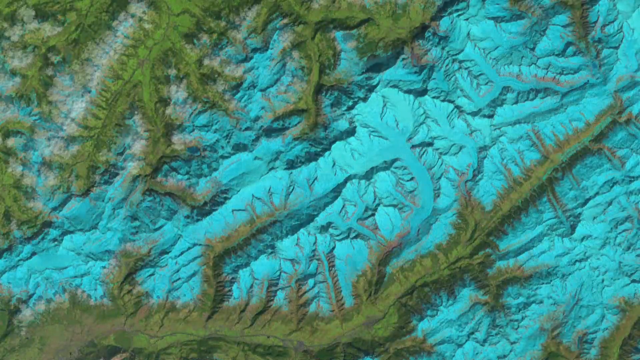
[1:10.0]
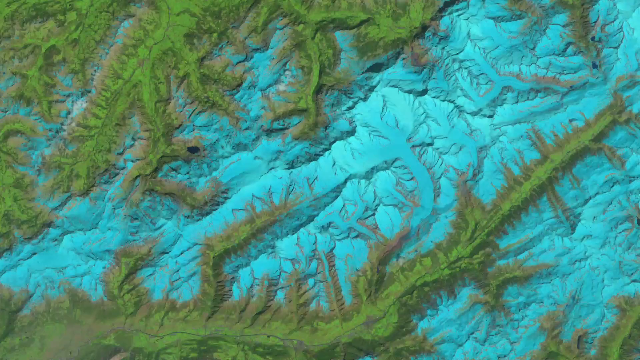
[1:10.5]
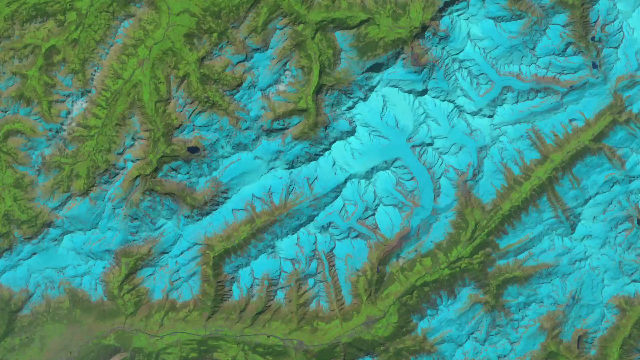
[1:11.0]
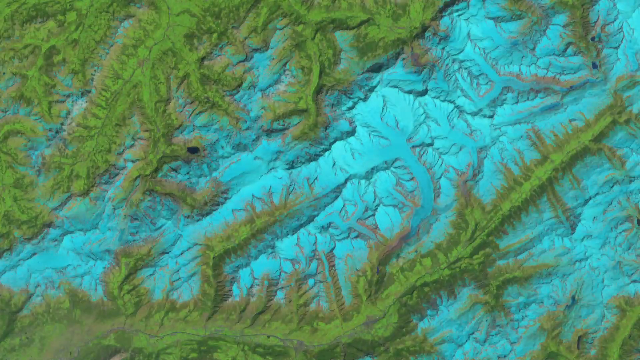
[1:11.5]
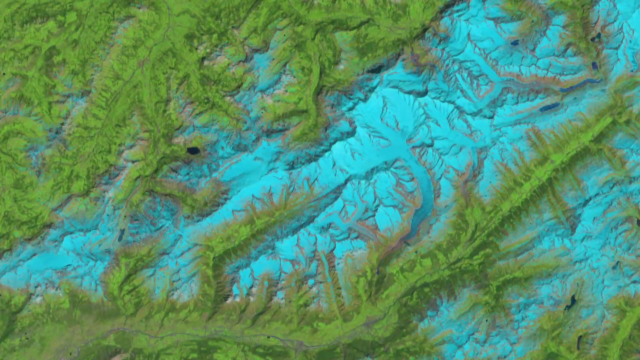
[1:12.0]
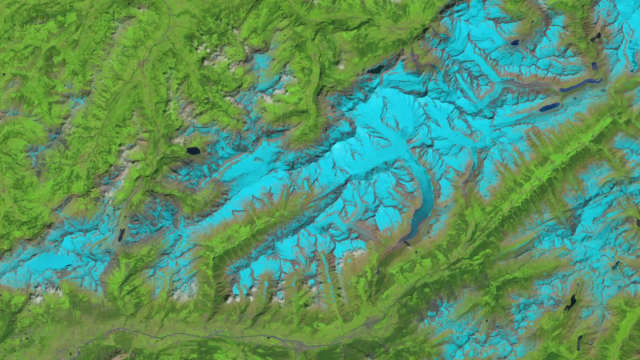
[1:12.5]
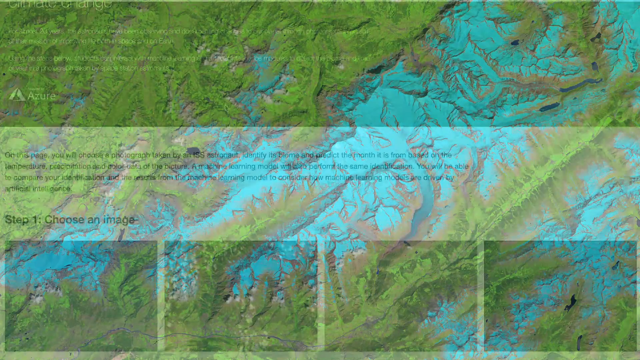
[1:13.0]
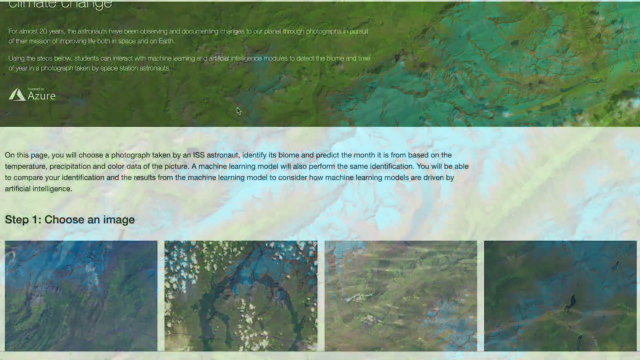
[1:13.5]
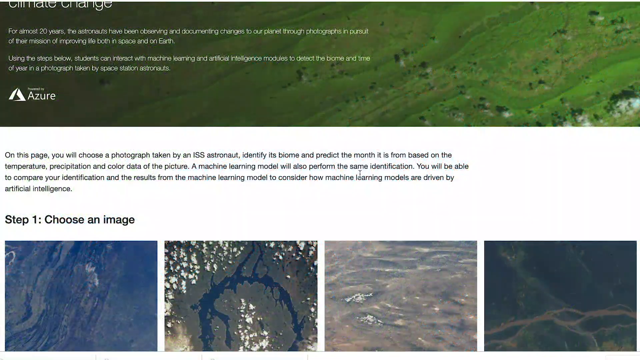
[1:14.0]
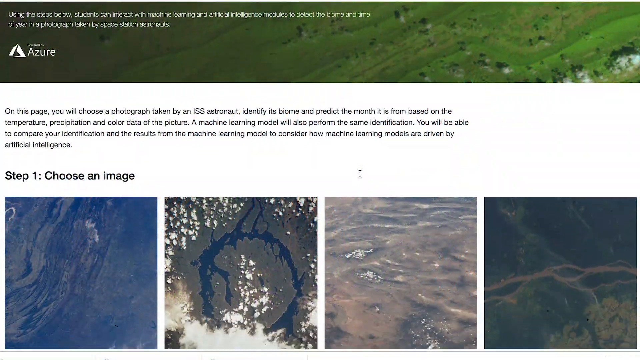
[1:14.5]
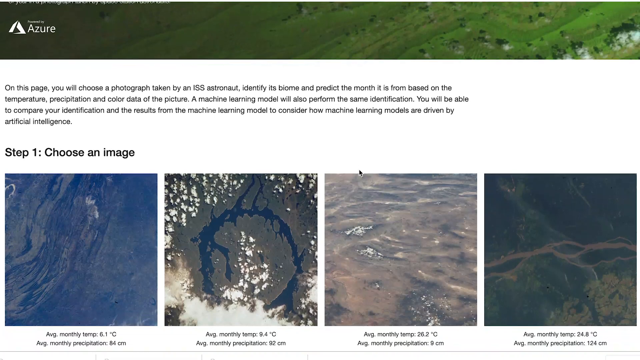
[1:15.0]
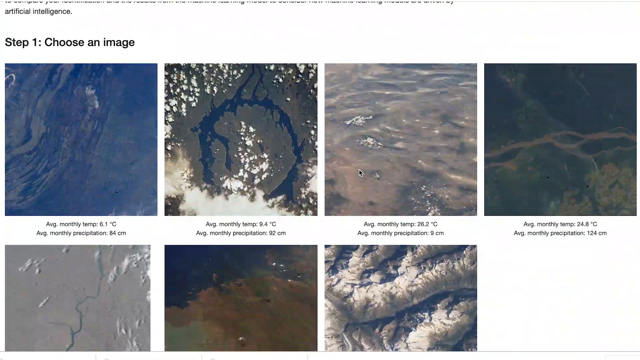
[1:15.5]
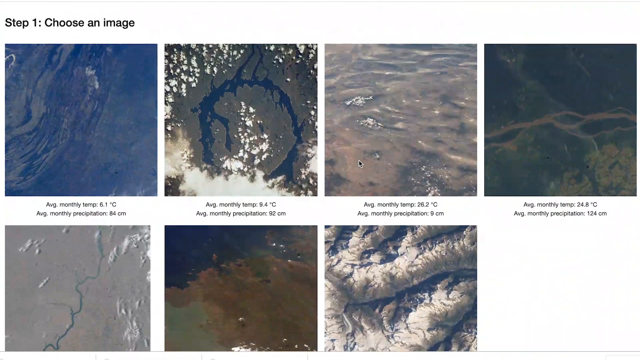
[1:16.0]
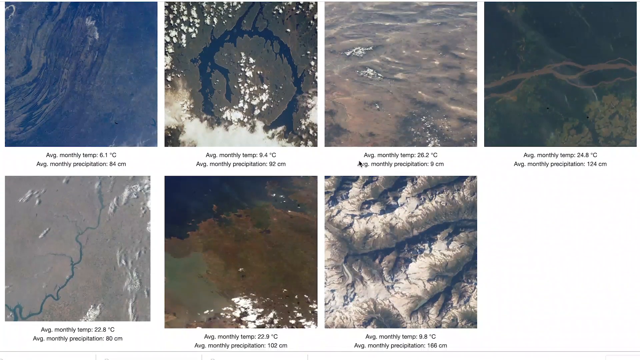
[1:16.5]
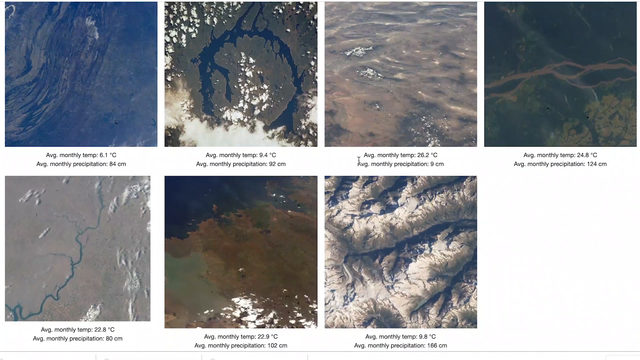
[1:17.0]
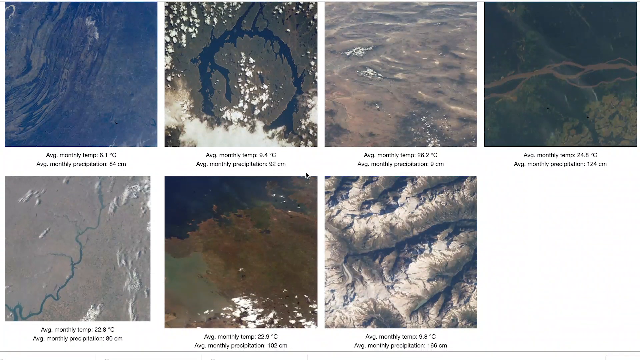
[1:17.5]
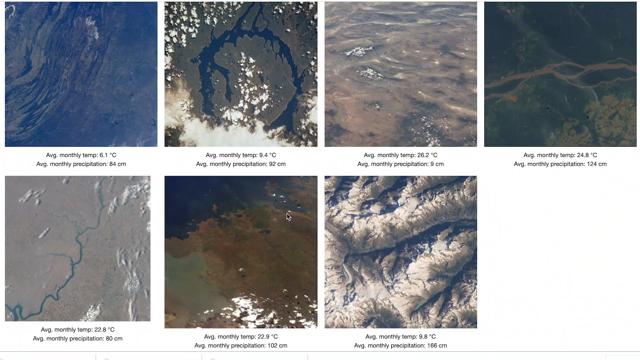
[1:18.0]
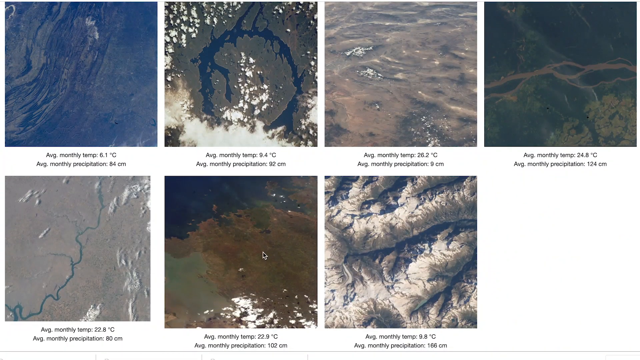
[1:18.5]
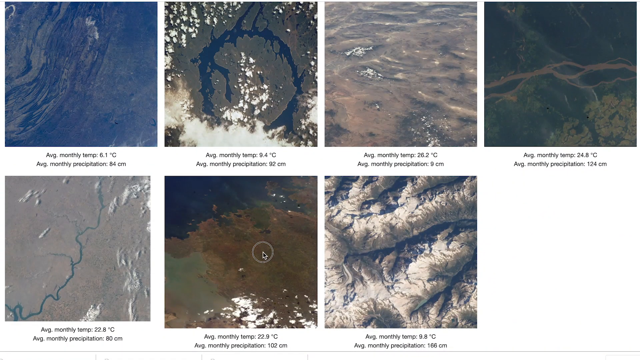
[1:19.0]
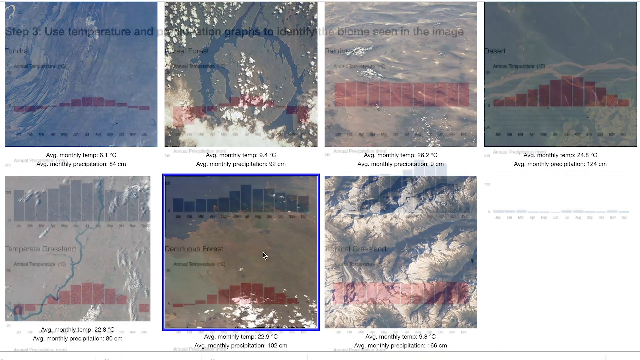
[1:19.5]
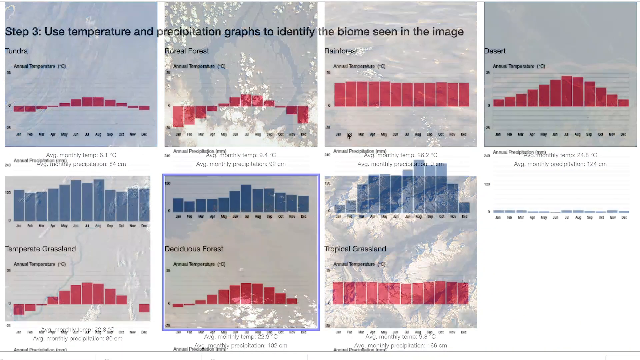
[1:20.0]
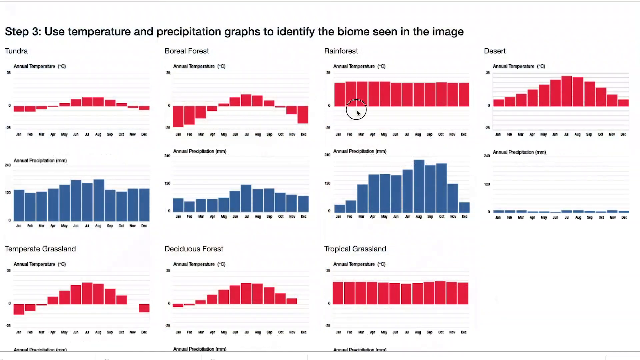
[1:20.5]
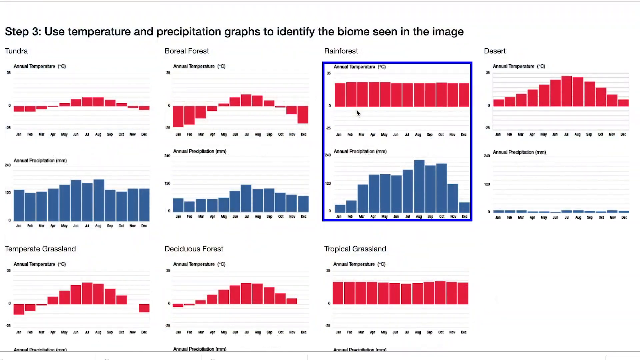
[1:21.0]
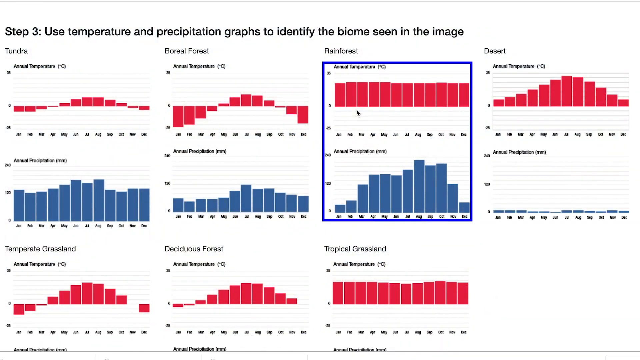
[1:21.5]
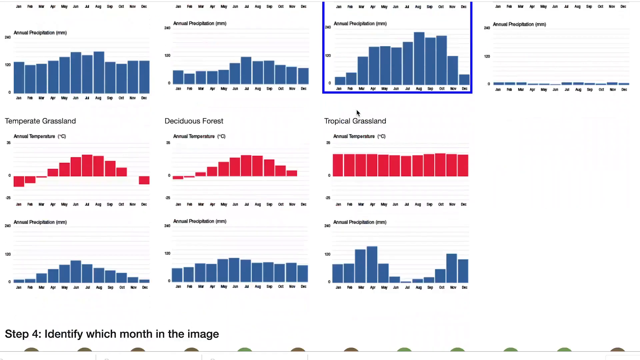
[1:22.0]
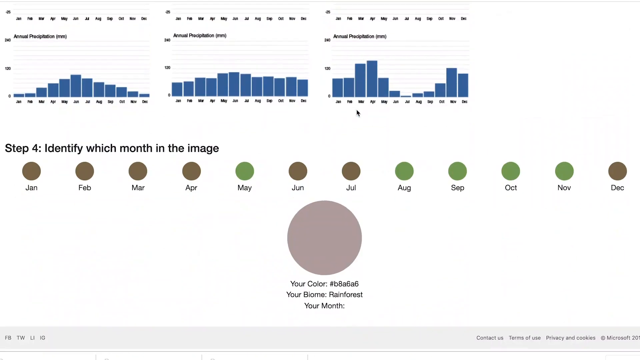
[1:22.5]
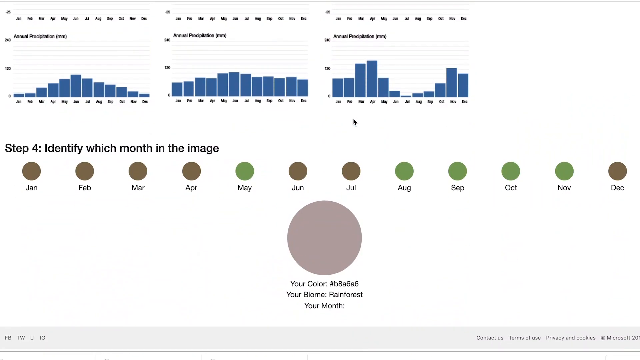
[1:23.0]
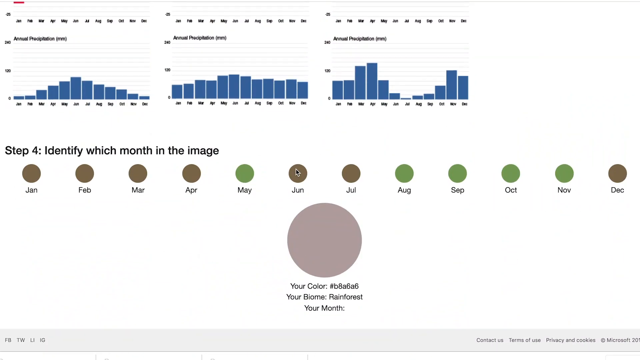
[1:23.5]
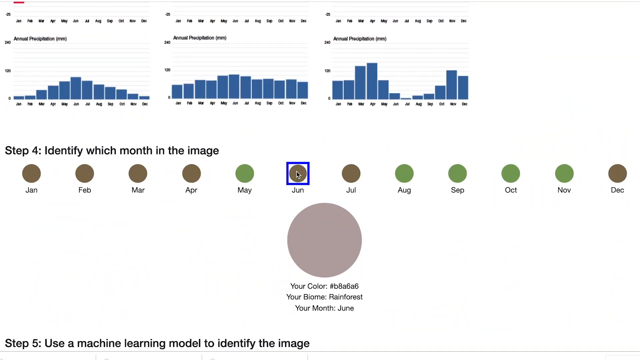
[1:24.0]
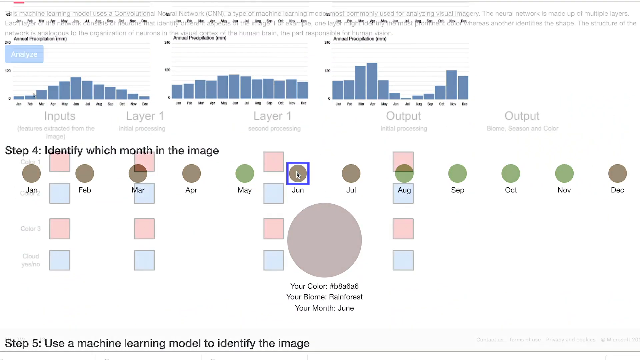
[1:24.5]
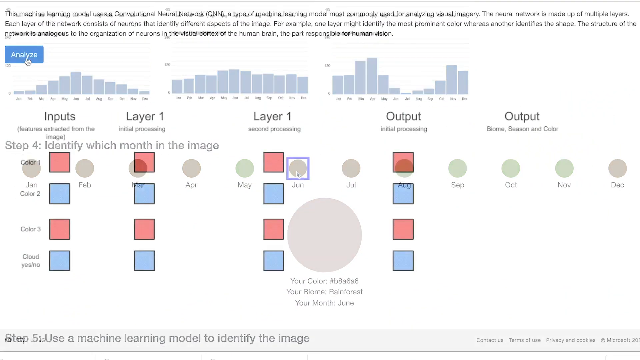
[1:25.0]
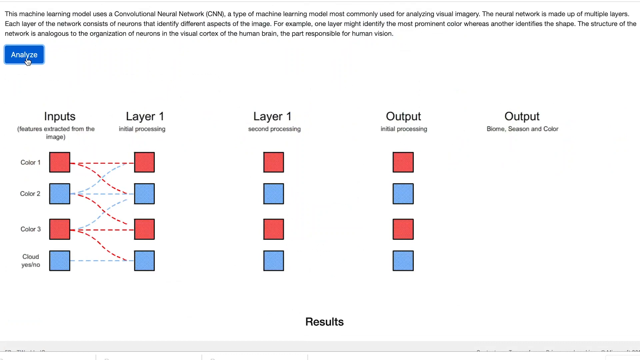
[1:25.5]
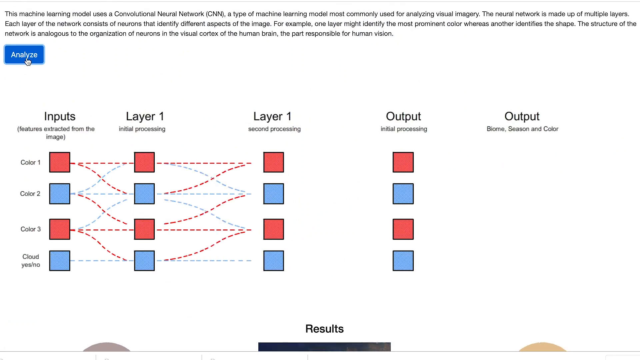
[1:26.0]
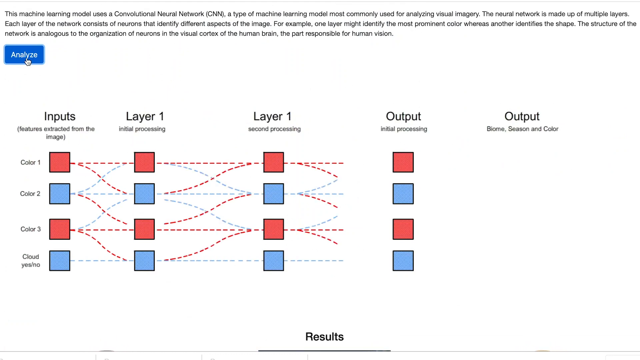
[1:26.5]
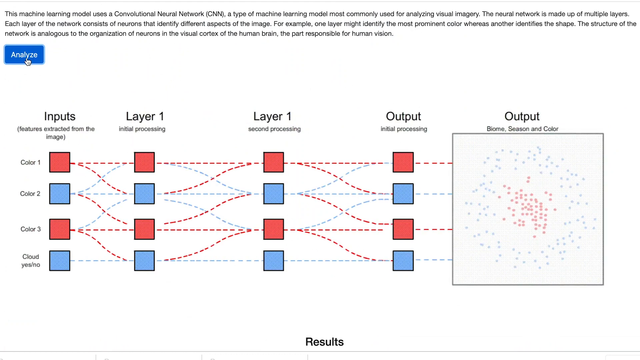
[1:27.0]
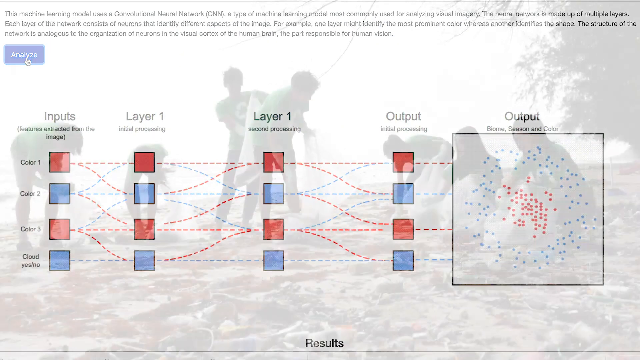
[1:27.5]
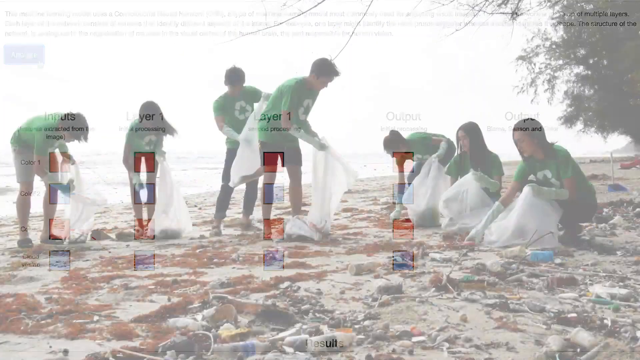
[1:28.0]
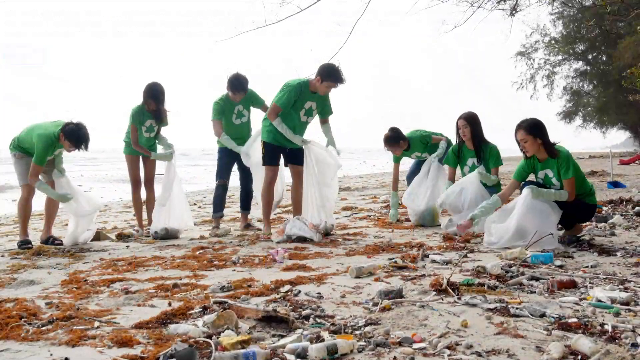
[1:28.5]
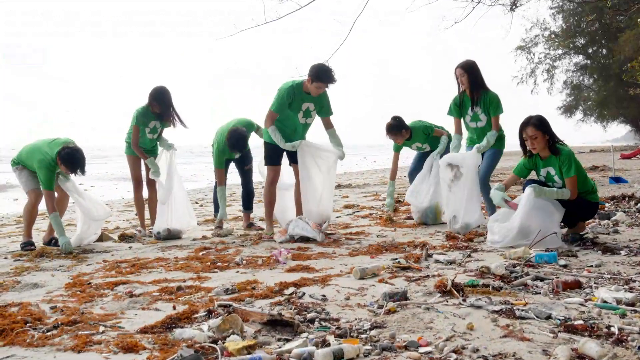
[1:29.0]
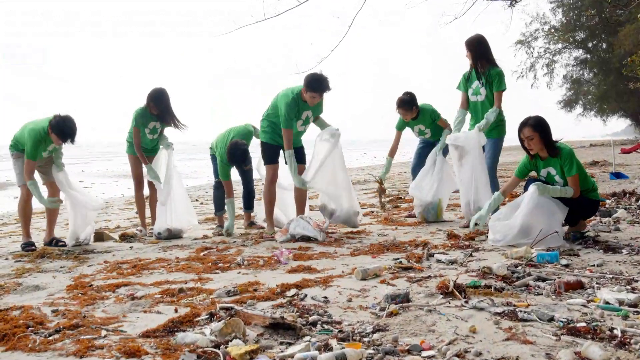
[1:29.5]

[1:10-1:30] Bluish and greenish landforms appear, and the green looks like it is growing over the blue. The words "climate change" appear. A page with text that is hard to read says "you will choose photographs taken by a ISS astronaut" and then "choose an image," with different images shown on the page. Categories such as "Tempered grassland" and "tempered forest" are listed, with a lot of data in the next box, followed by "identify which month in the image" and sections for inputs and layers, all of which can be touched on the computer. Then a group of people on a beach wearing recycling shirts appear to be picking up debris.